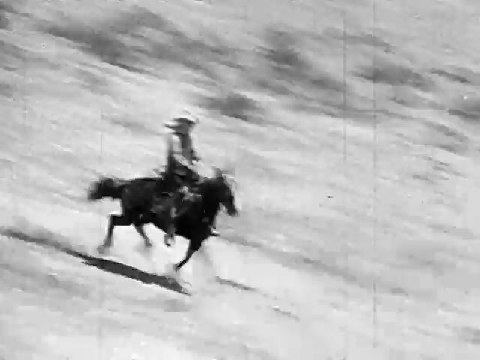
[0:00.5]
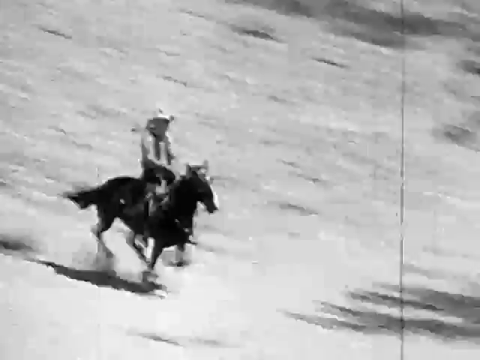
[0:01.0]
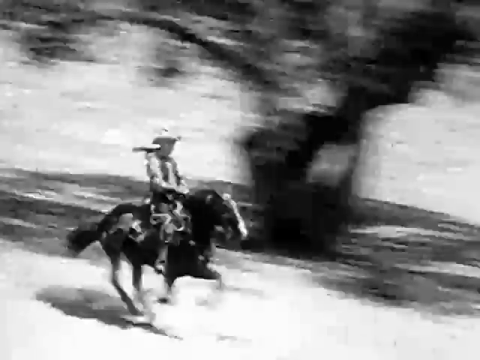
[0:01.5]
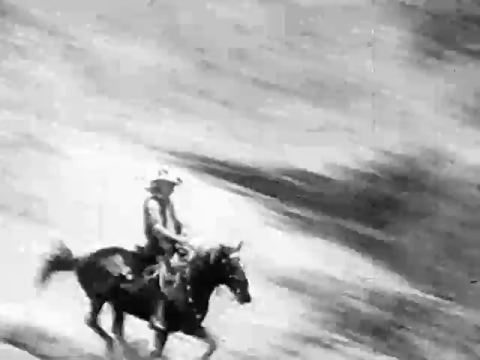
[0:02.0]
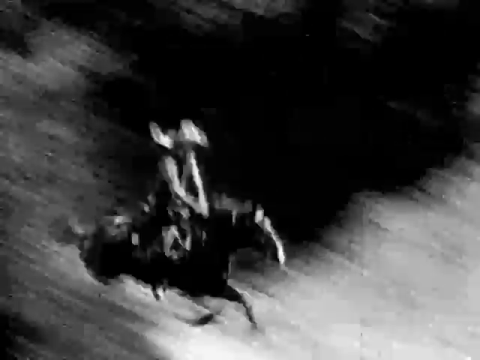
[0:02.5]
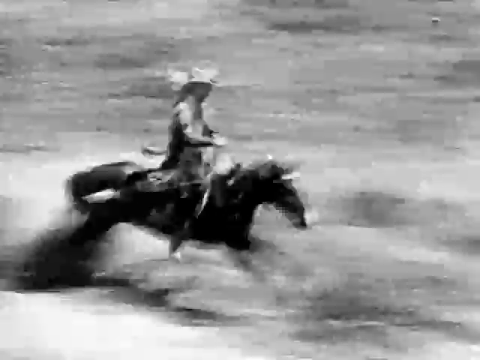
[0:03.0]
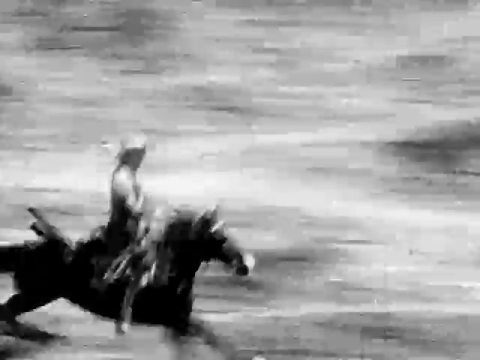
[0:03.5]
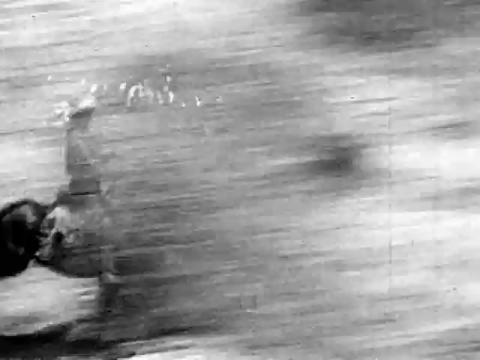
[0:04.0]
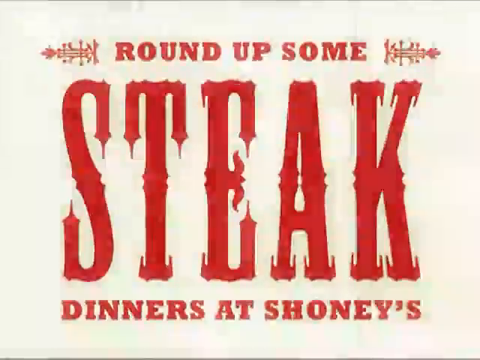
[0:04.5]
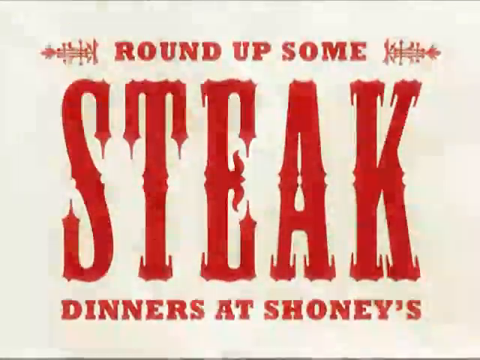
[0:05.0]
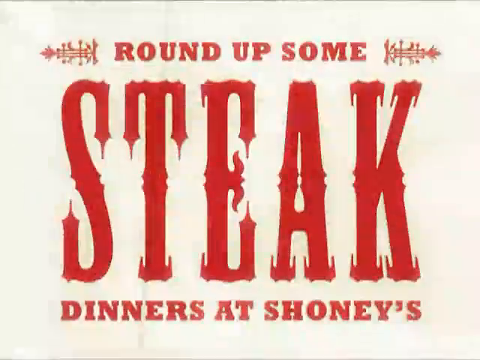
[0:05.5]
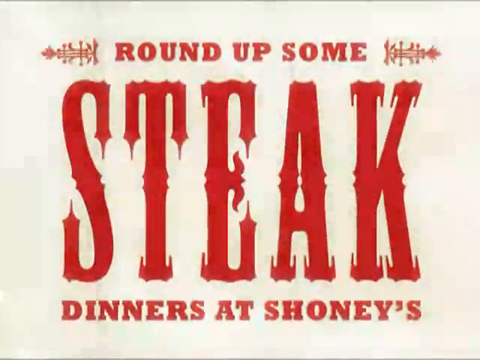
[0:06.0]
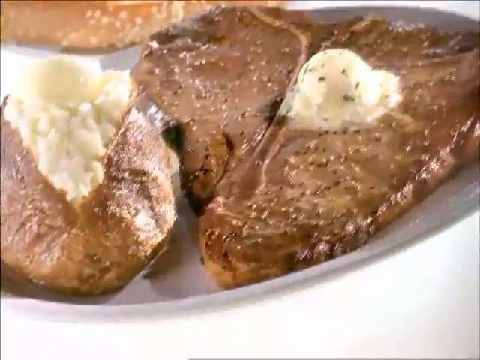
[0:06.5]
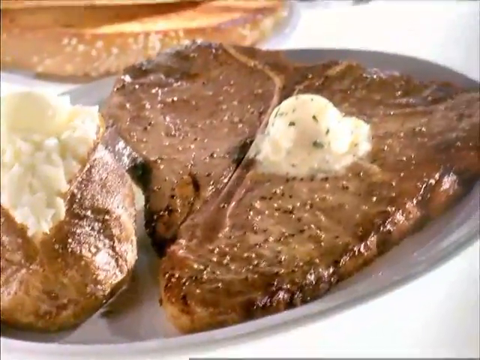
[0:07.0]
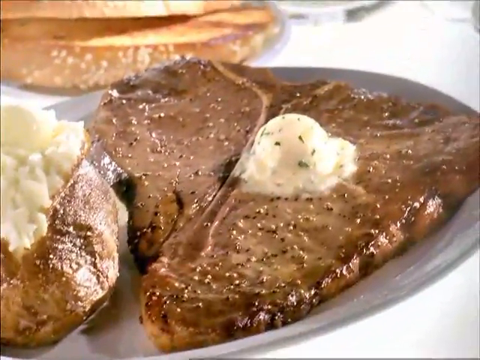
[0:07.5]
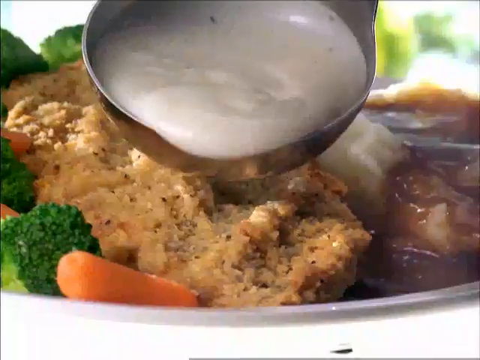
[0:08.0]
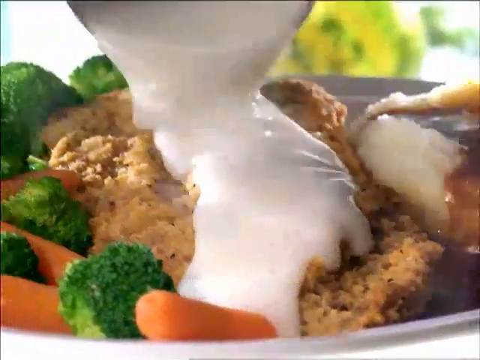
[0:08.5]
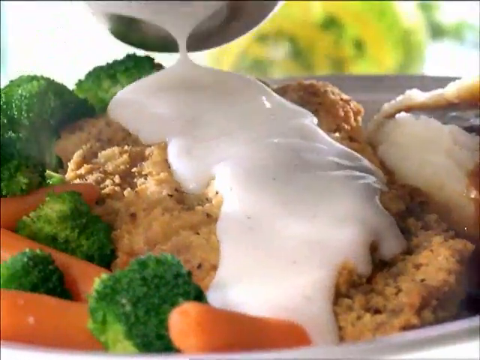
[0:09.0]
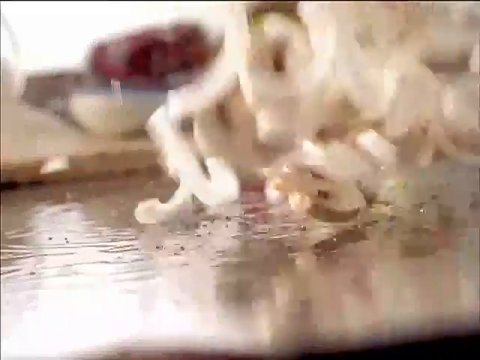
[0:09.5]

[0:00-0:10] A man dressed in cowboy clothes rides a horse through an open field with a lot of trees around it. The video is in black and white. Text reads "round up some steaks, diners at Shoney's." Steaks are shown on plates, and food is being prepared. The man rides the horse fast across the field, holding the railing. Steak is shown neatly prepared on a plate with some onion placed on it.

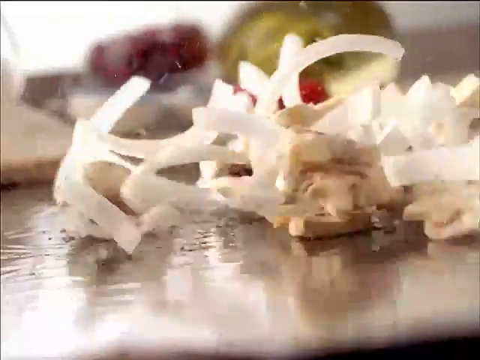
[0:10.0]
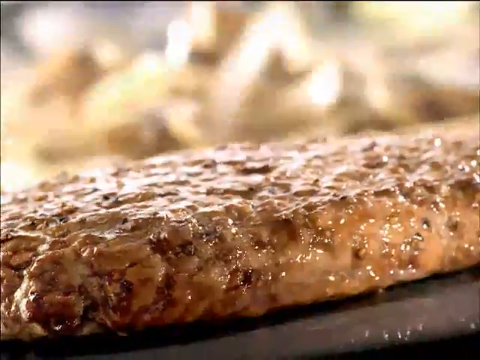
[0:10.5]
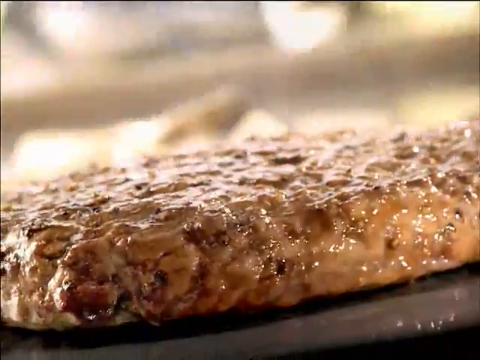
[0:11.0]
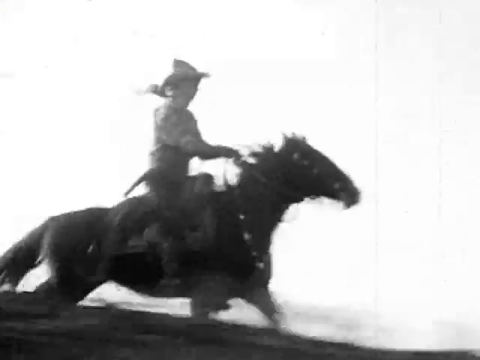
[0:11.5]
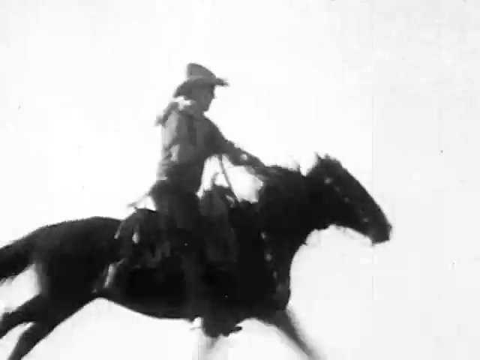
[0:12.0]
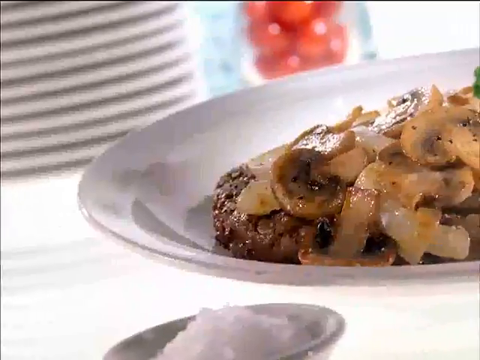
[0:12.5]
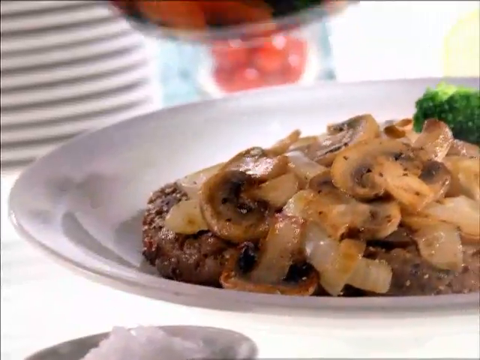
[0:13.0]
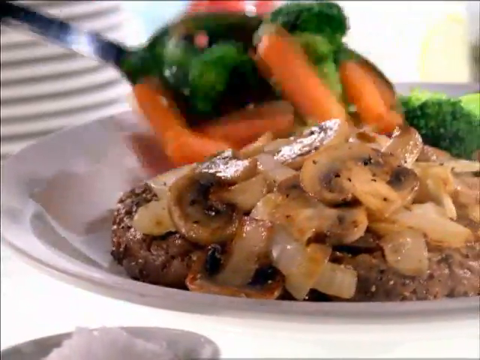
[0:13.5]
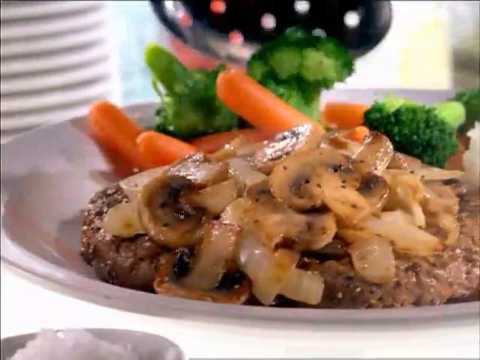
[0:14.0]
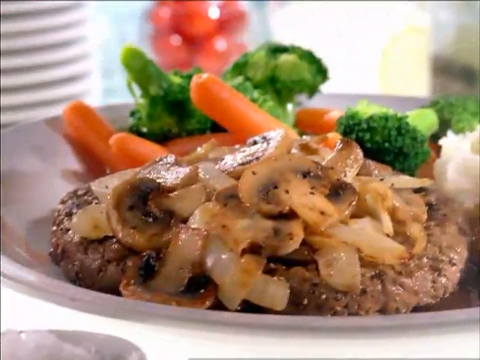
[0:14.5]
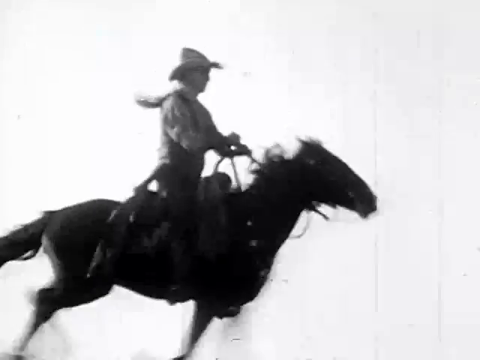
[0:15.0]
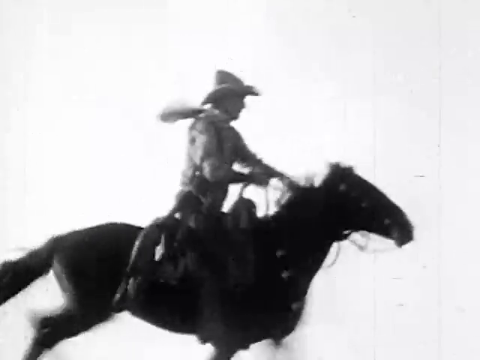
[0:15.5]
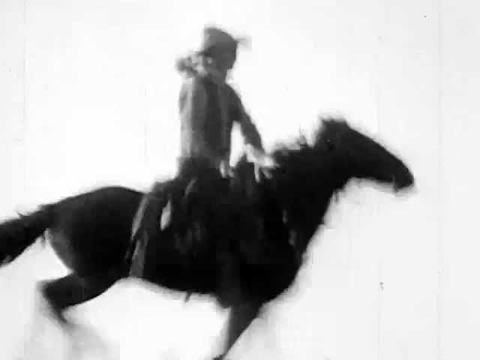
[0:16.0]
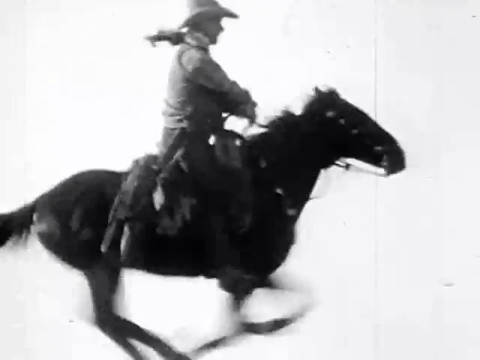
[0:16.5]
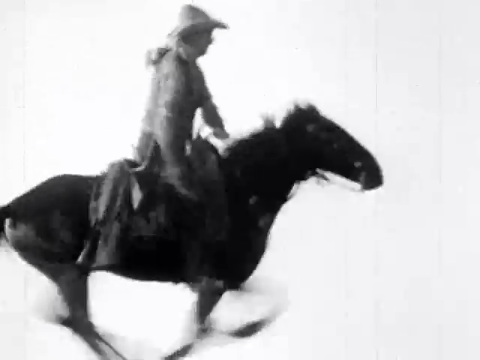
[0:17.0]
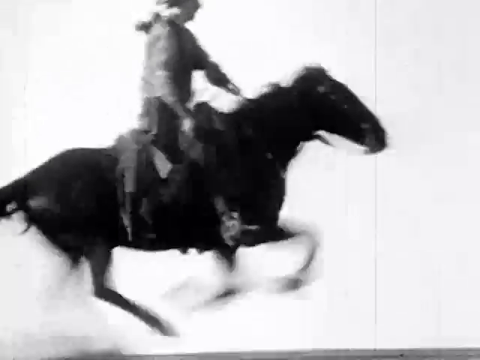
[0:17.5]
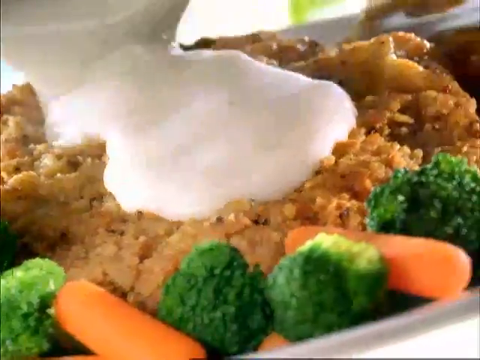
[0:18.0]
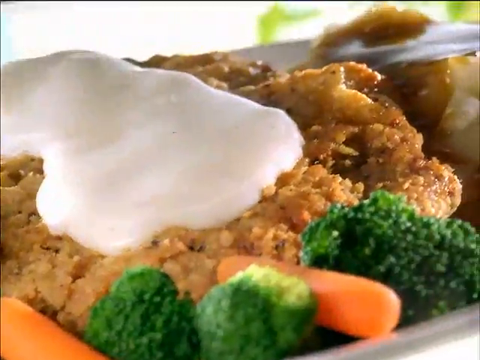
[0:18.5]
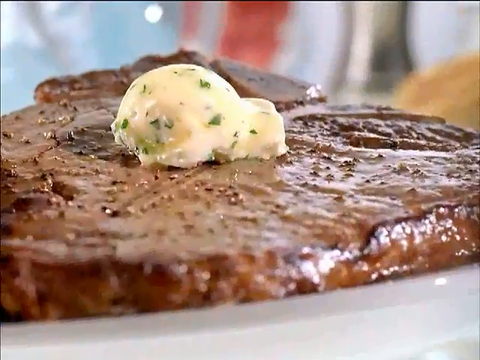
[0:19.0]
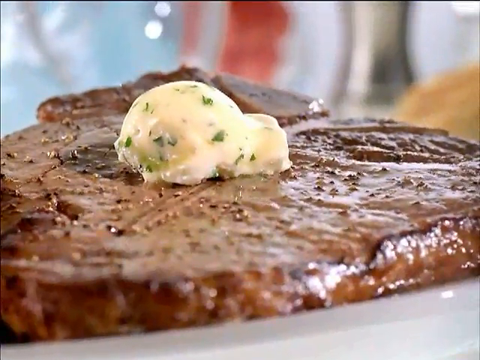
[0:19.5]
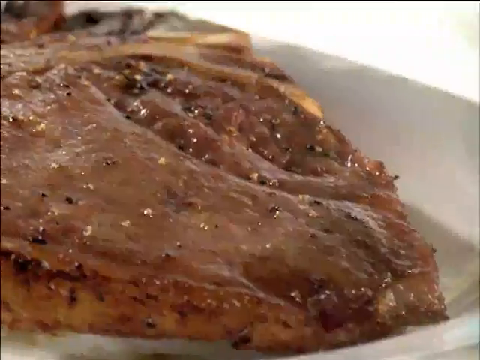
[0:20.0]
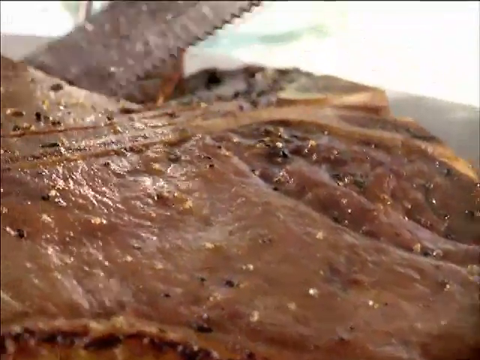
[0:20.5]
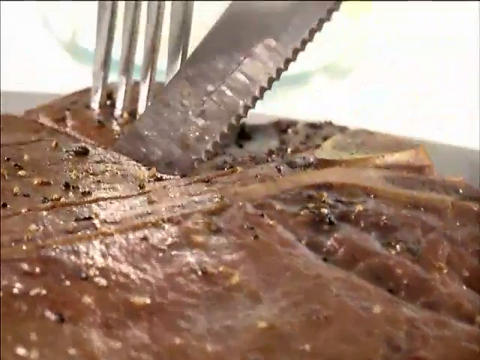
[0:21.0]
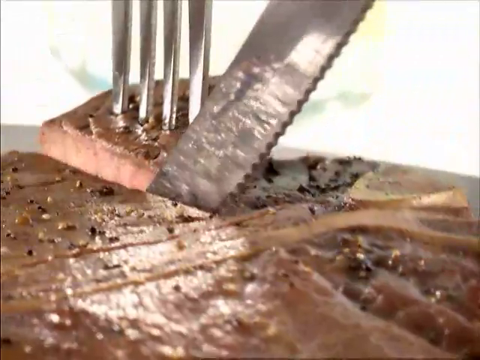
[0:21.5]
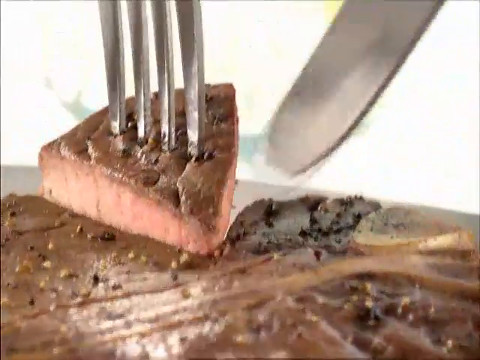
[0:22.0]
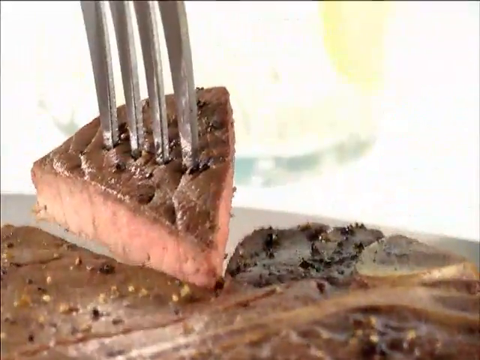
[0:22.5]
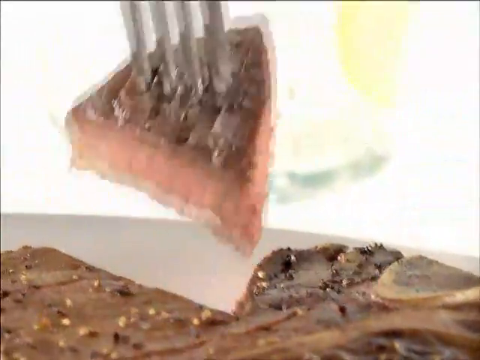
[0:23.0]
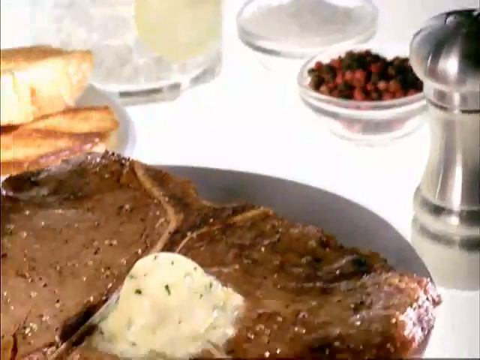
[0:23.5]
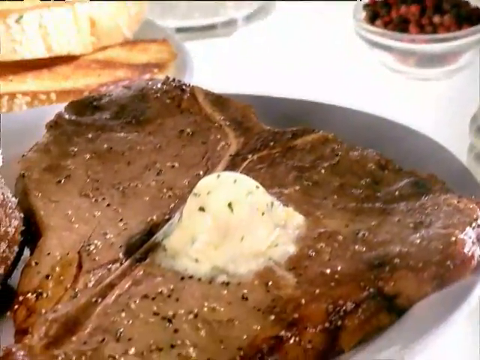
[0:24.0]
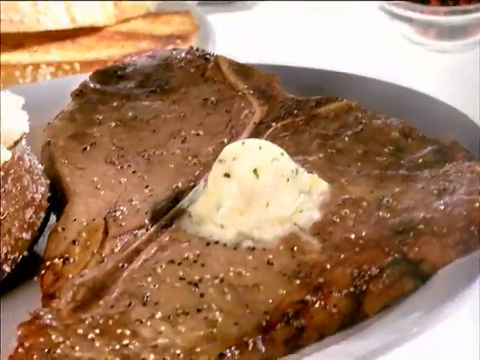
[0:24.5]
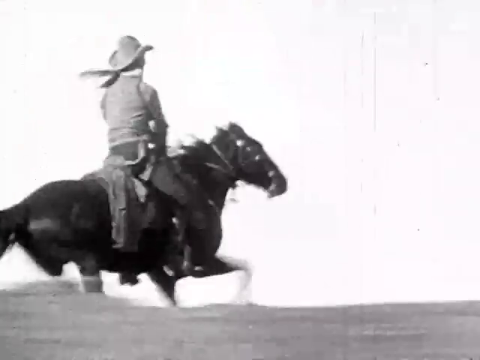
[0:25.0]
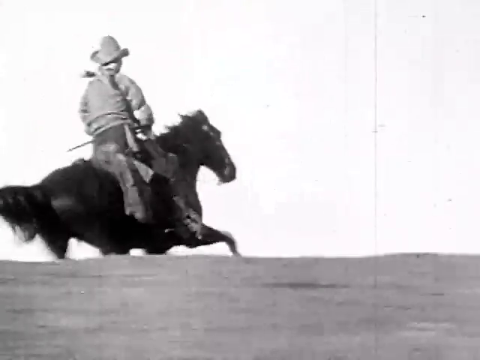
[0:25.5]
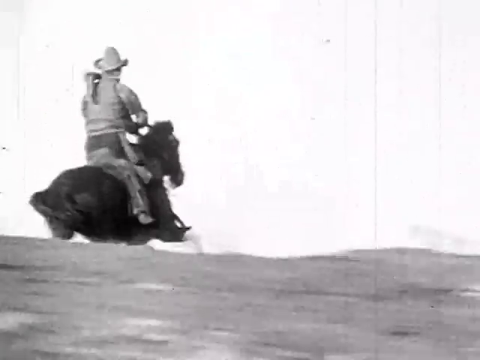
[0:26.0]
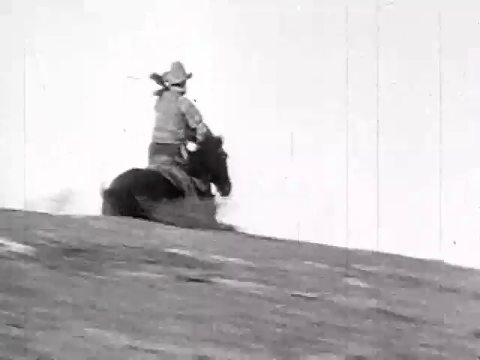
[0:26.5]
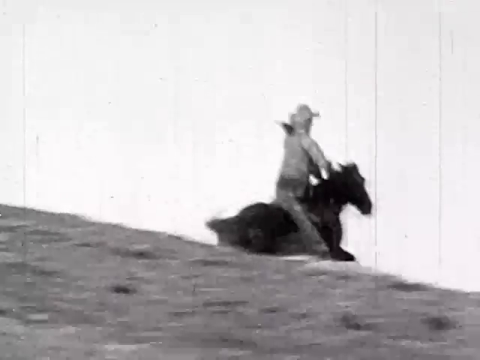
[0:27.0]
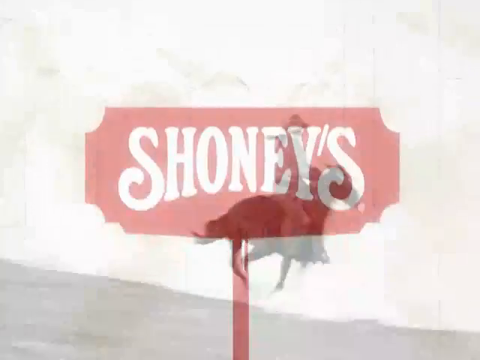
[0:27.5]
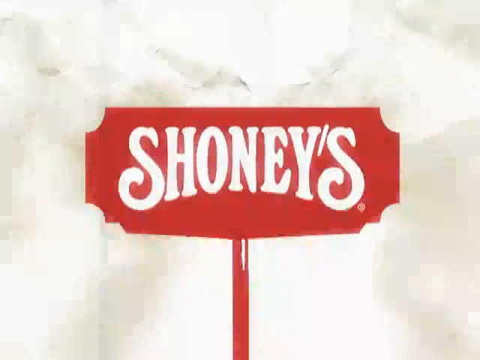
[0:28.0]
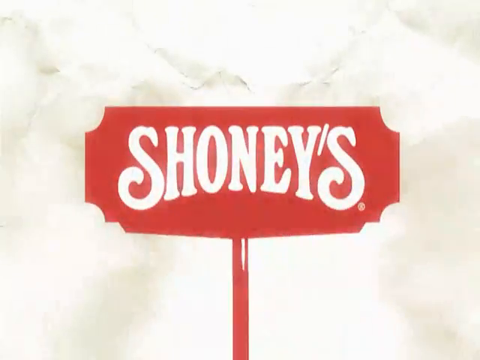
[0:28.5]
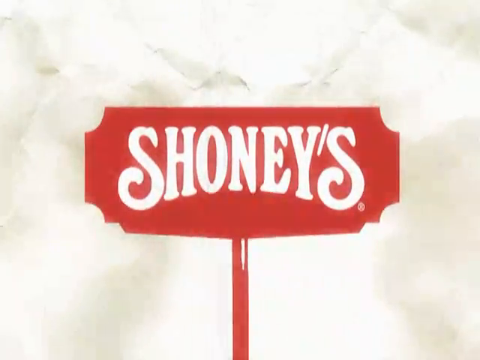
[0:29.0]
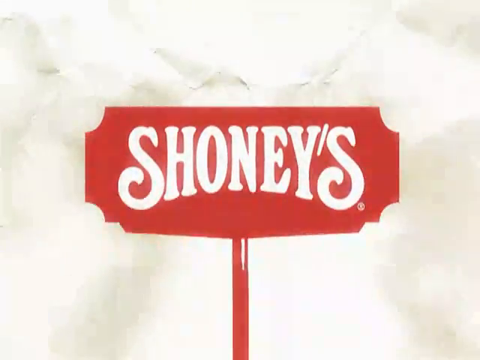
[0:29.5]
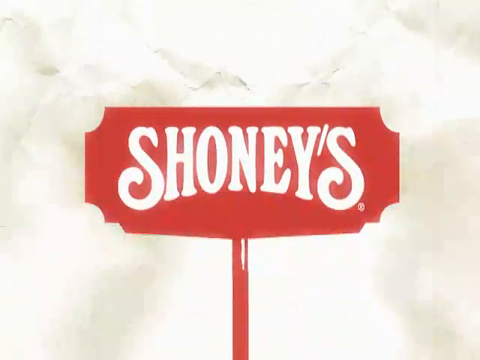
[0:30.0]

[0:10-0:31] A steak is placed on a plate. In black-and-white footage, a man dressed in cowboy clothes, a cowboy suit and boots, rides a horse fast through a field. There is milk in the plates, and cream on the steak is melting. Someone uses a fork and a knife to eat the meat. Shoney's is seen, along with the steak being prepared. Some carrots and coriander are placed beside the steak on a plate, and cream is placed on it.